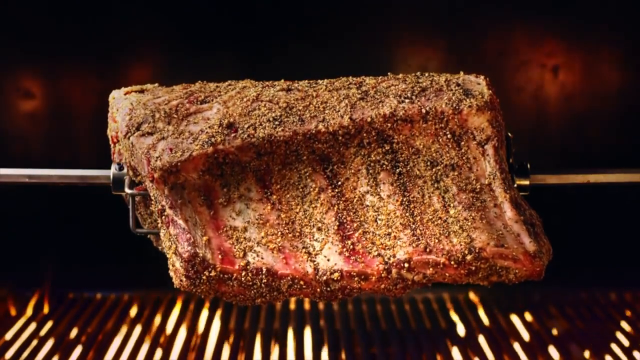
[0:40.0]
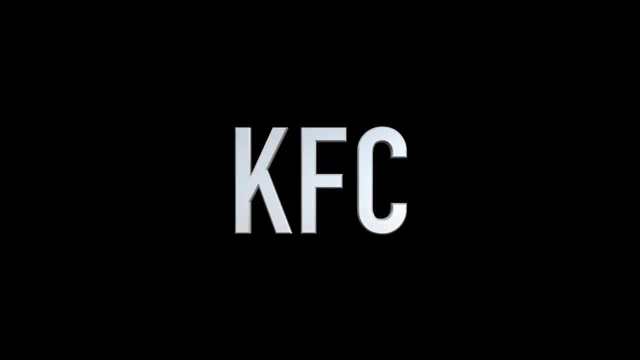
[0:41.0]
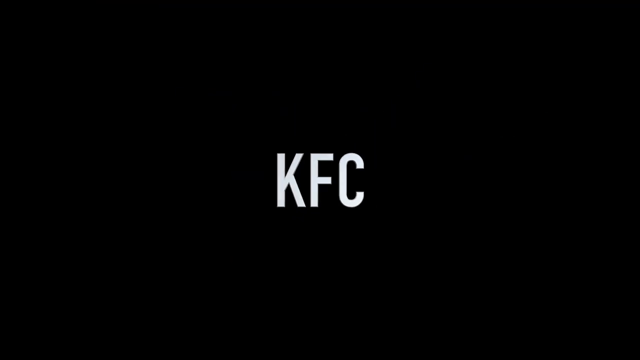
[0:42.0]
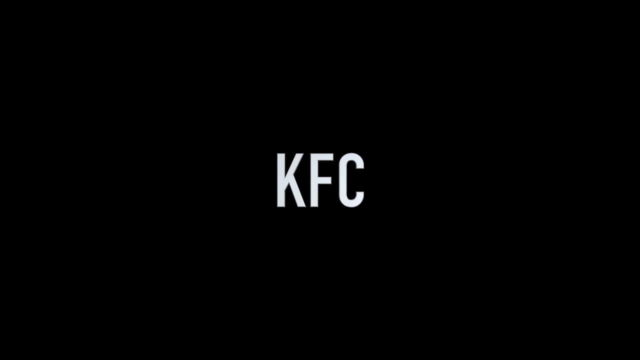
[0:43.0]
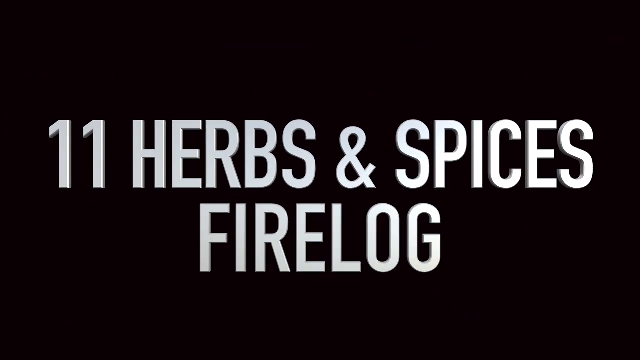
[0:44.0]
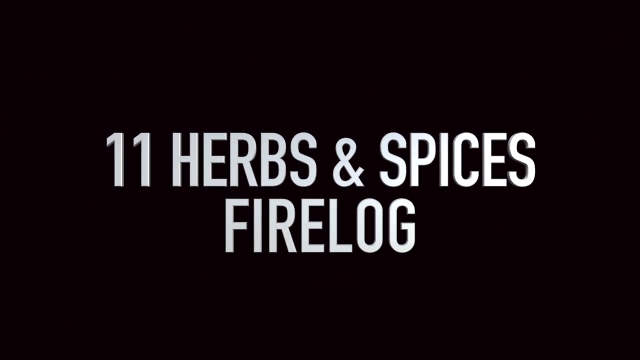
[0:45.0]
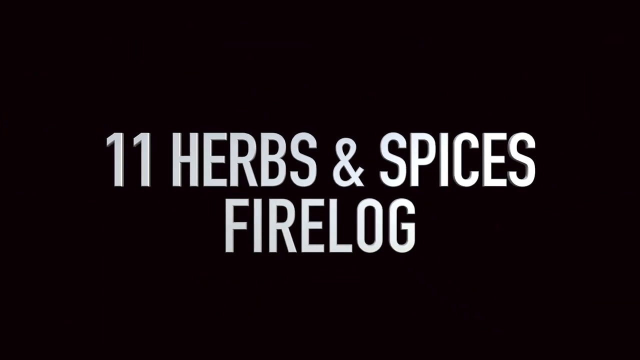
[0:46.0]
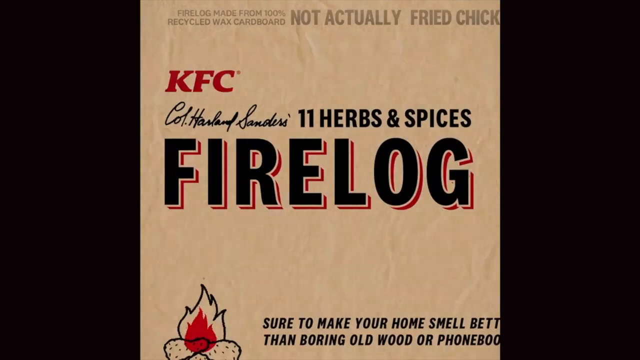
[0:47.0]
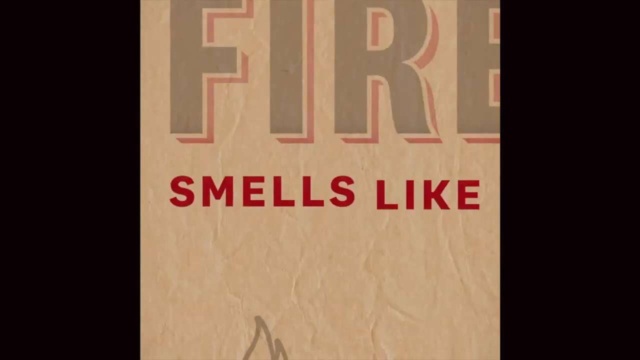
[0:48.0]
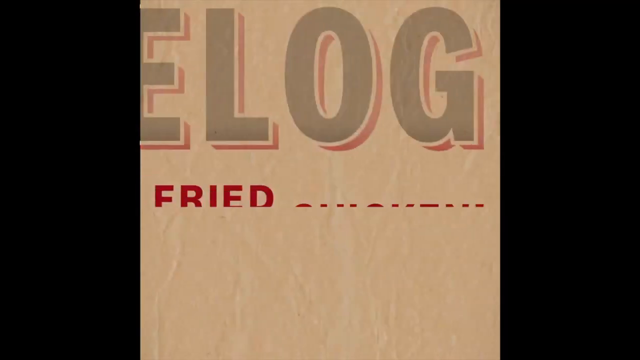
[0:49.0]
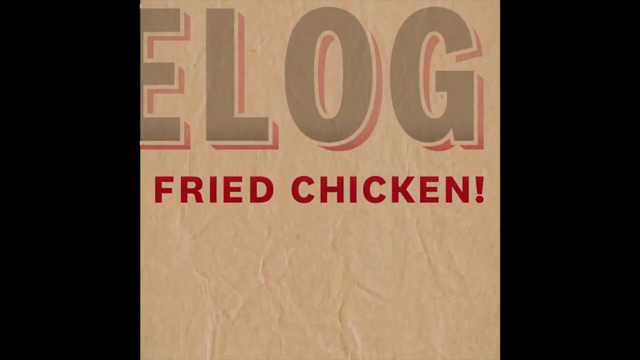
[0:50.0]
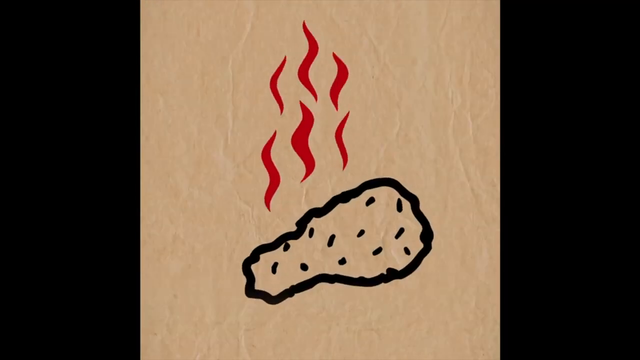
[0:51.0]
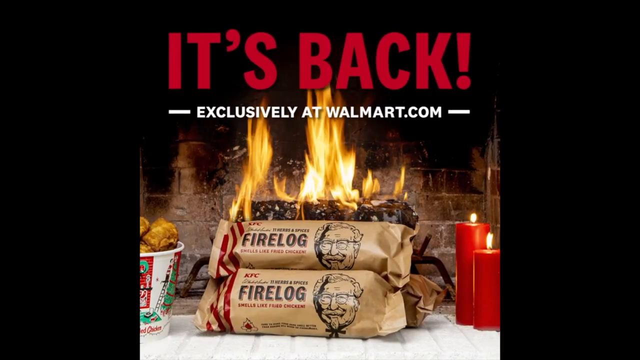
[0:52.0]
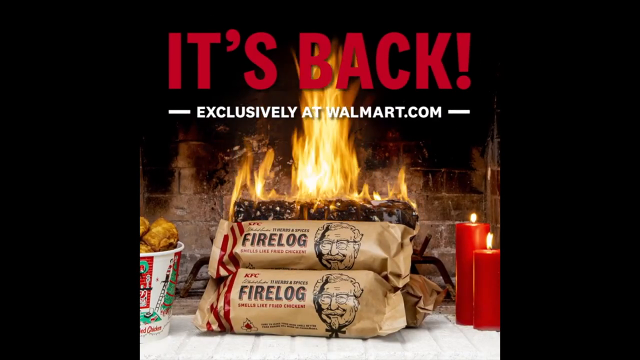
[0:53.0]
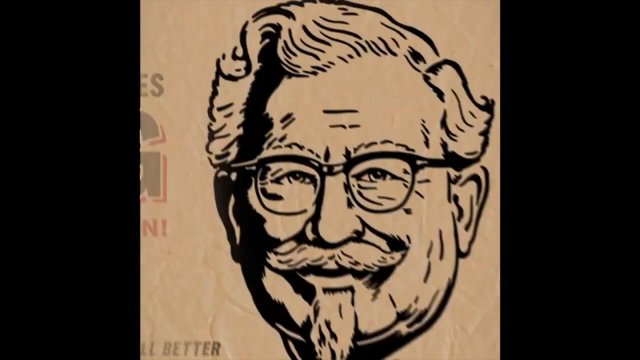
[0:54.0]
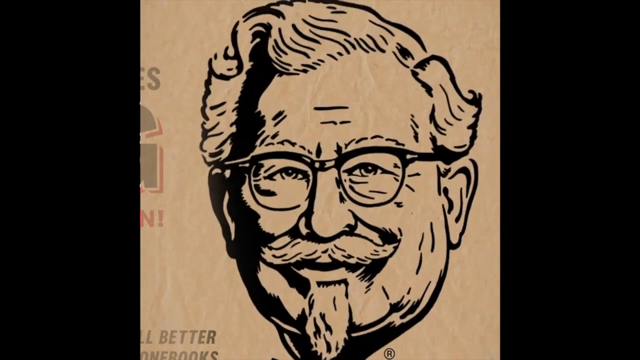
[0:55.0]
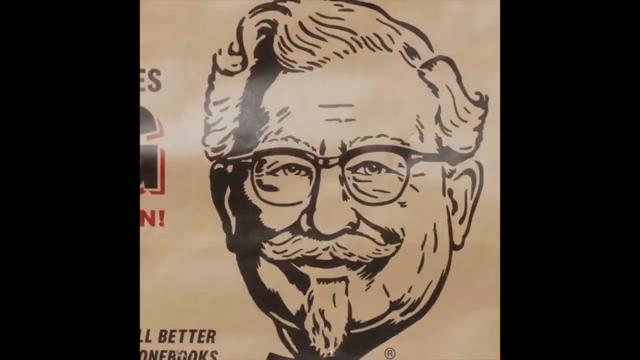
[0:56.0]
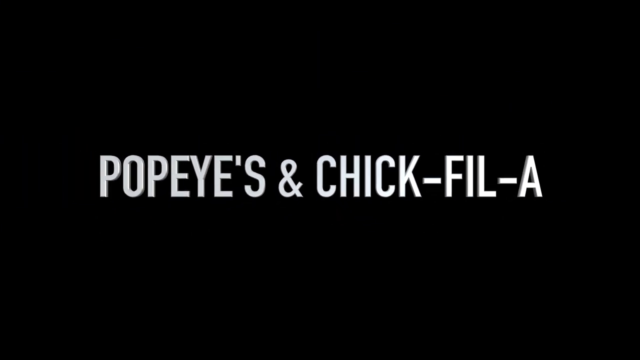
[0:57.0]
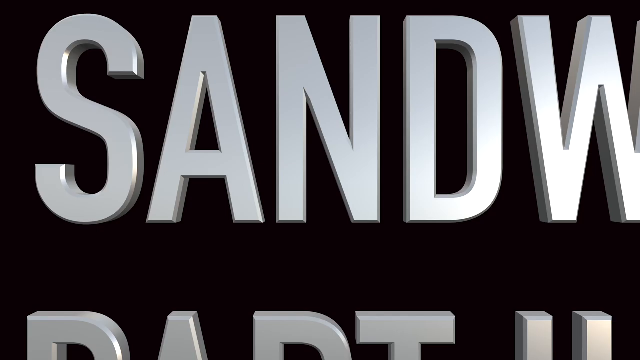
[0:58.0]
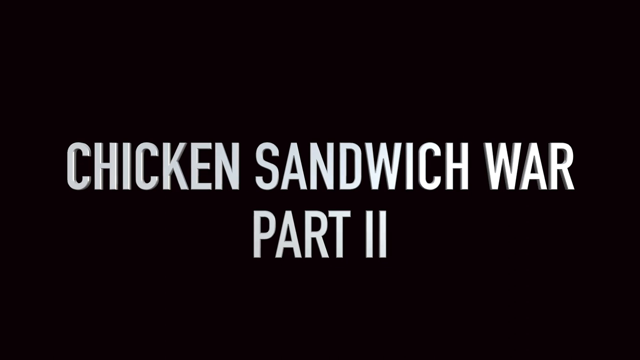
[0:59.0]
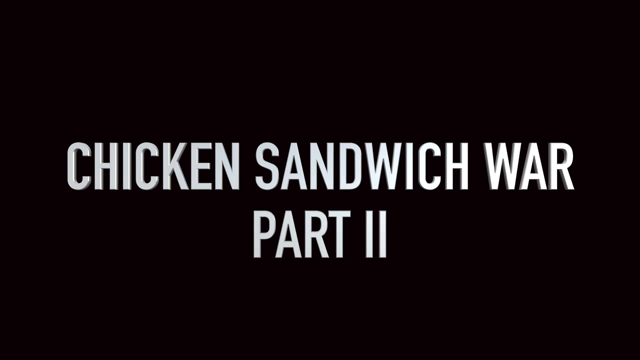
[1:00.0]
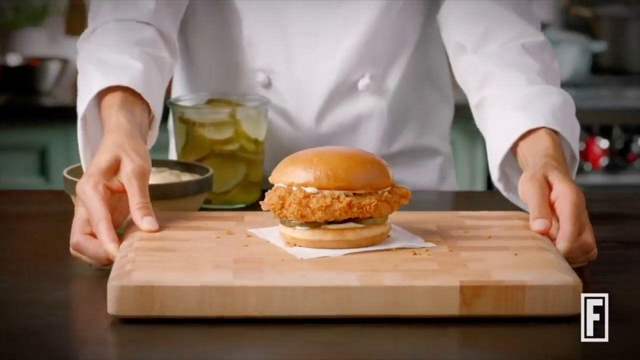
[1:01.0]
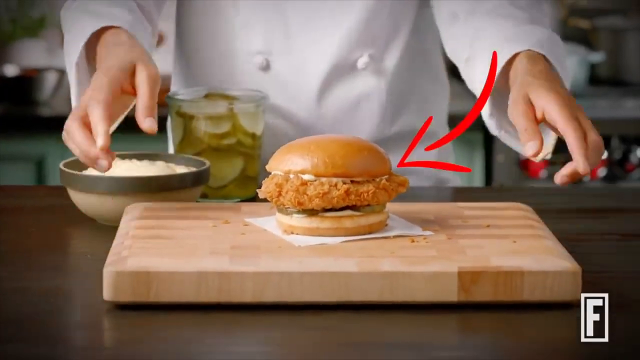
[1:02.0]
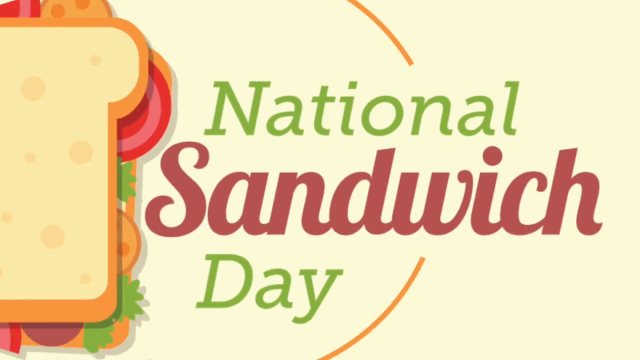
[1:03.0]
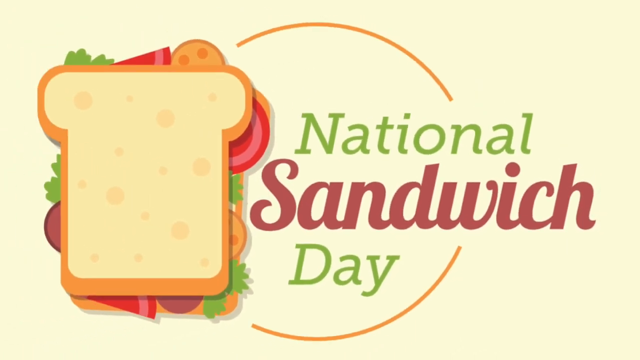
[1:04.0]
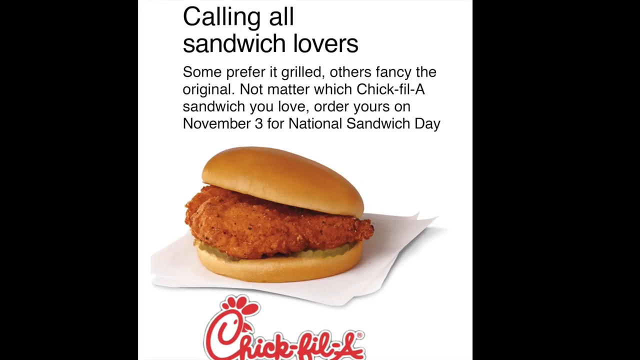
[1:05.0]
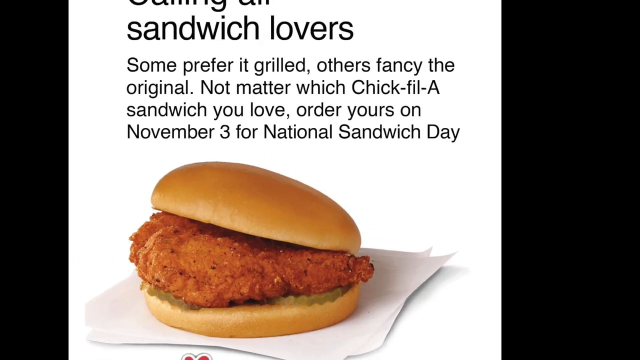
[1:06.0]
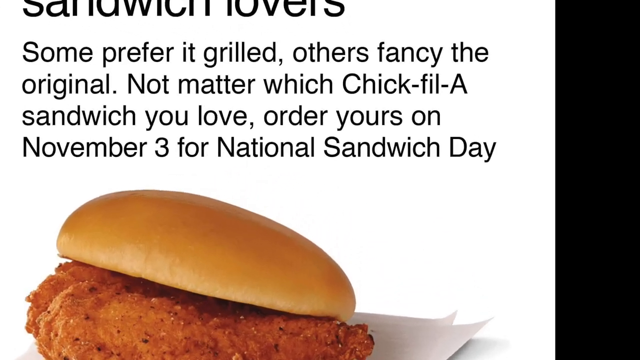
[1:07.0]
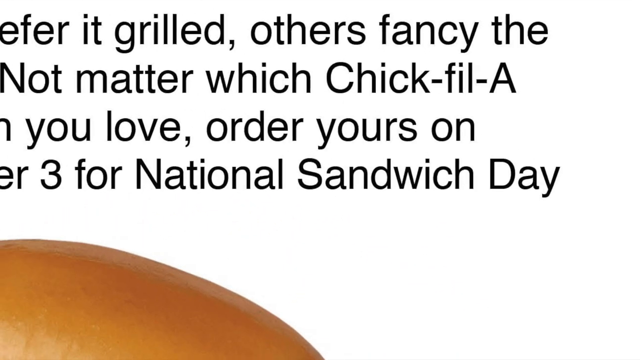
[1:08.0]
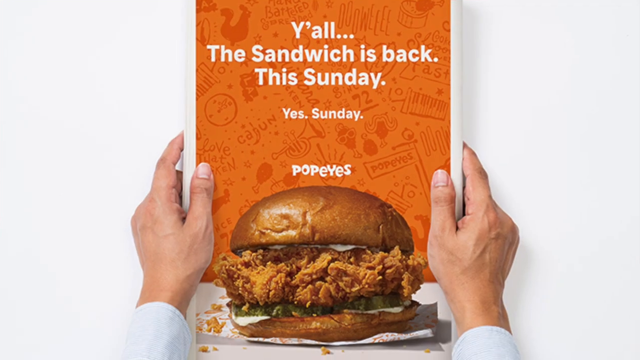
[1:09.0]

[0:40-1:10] A KFC log cooks on an open fire. The screen then turns black with "KFC" in a large white font that gets smaller and smaller as the camera zooms out. Next, the screen fills with the white text "11 herbs and spices fire log", which also shrinks. A light brown background, almost like a piece of paper, shows details about the KFC fire log, including "it smells like fried chicken" in red lettering, along with a chicken drumstick with flames rising from it. A picture follows of a fire log wrapped in paper in front of an open fire, with "its back" in red directly above it and "exclusively at walmart.com" in white beneath that. The classic KFC logo with the twinkle in the eye appears, then the screen goes black and "Popeyes and Chick-fil-a" appears across it in white, getting smaller, before changing to "chicken sandwich war part 2". A cook stands beside a cutting board presenting a burger, with a red arrow pointing to it. Then "national sandwich day" appears with a picture of a slice of bread and various ingredients underneath it forming a sandwich, such as tomato slices and salad. Finally, a close-up shows a burger made of chicken pieces, with accompanying text reading "calling all sandwich lovers".